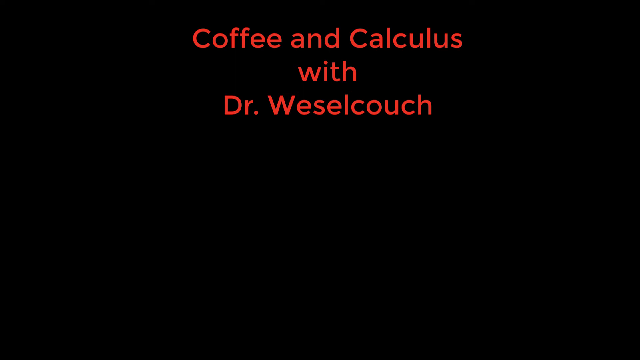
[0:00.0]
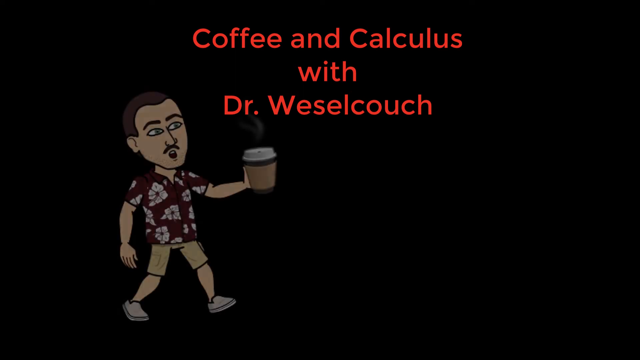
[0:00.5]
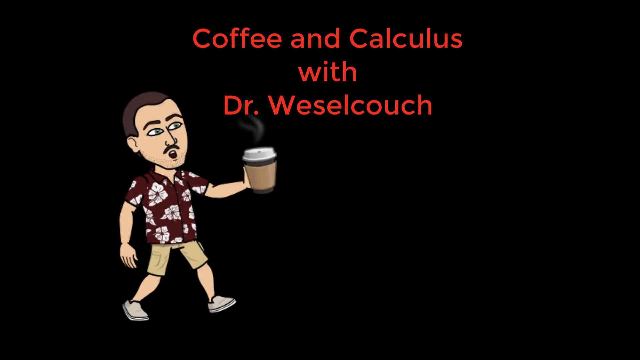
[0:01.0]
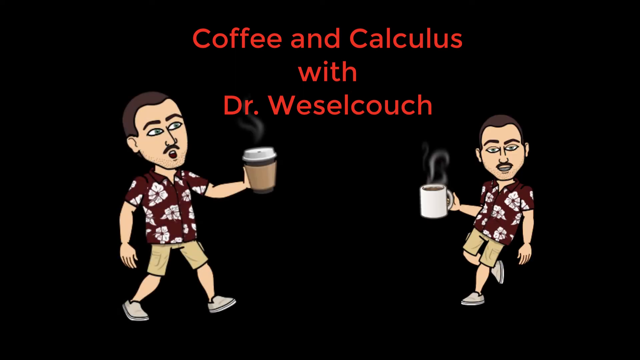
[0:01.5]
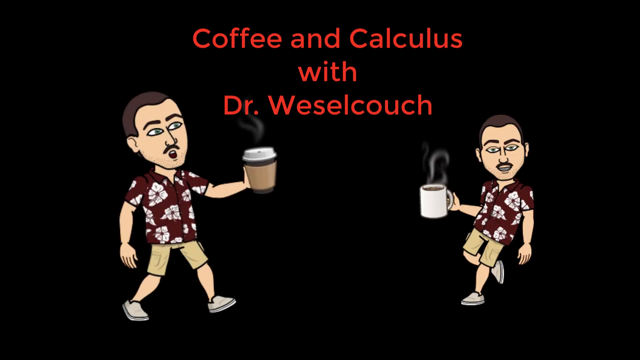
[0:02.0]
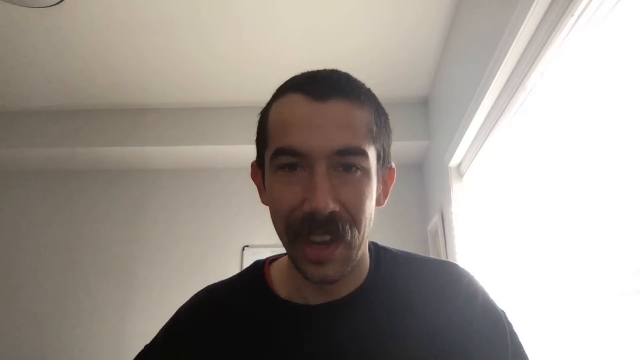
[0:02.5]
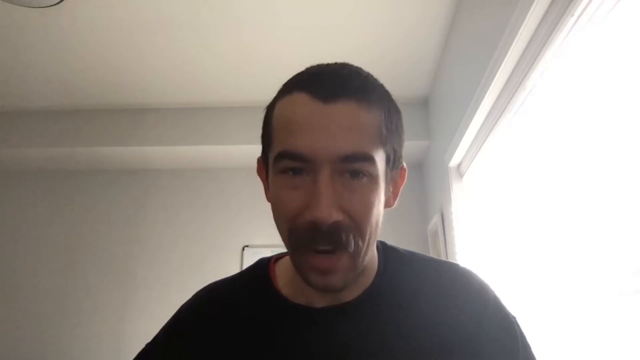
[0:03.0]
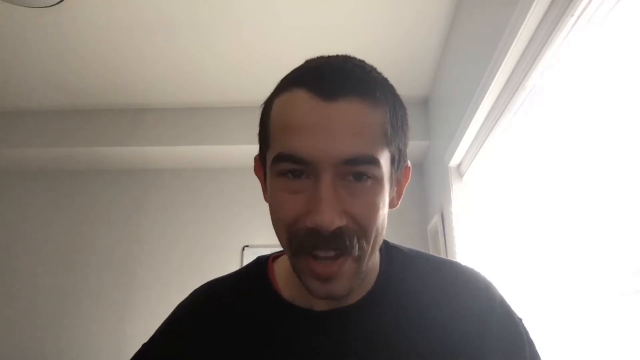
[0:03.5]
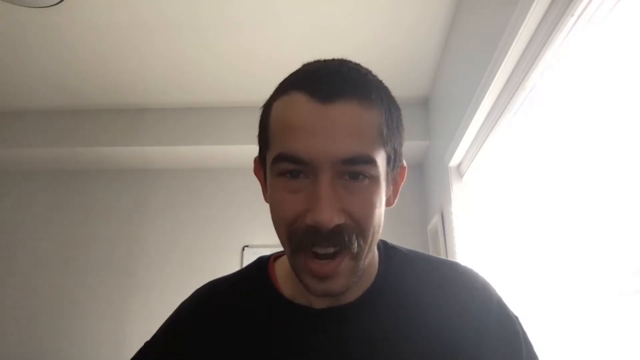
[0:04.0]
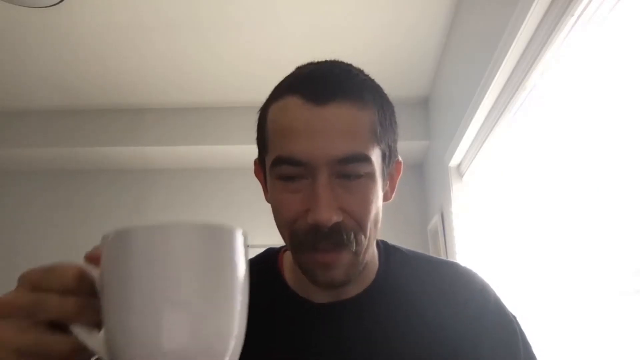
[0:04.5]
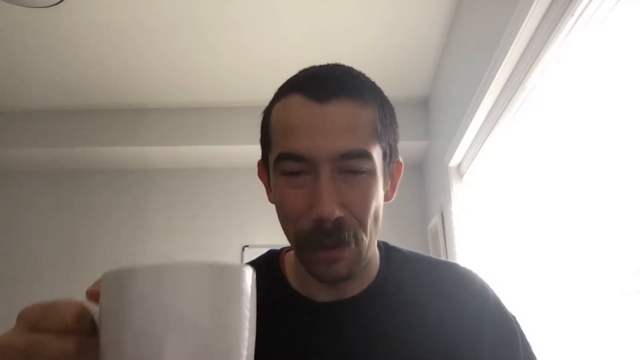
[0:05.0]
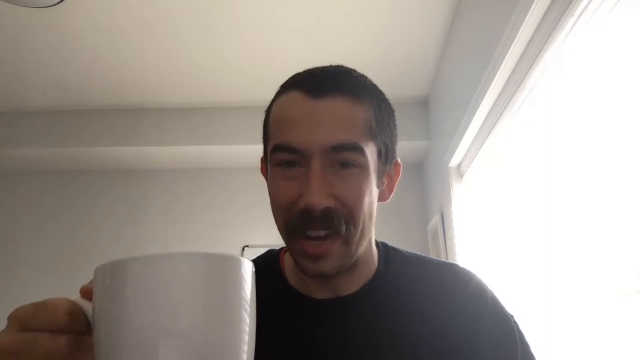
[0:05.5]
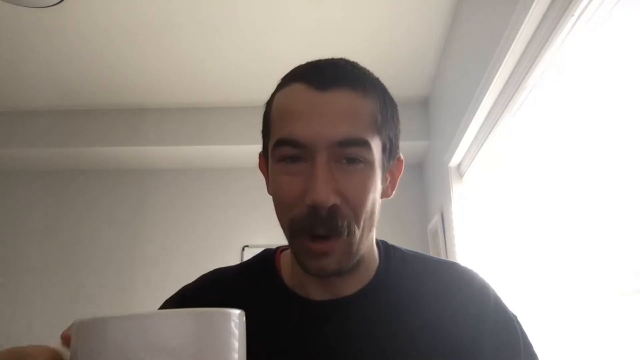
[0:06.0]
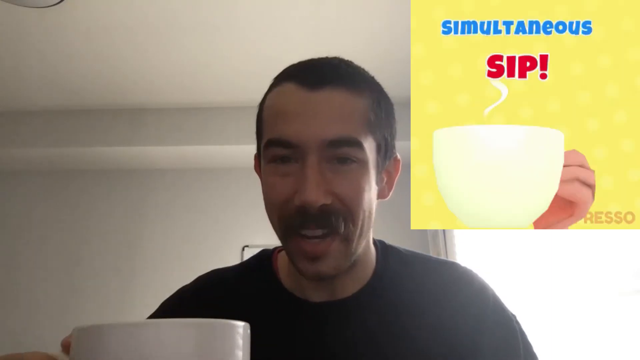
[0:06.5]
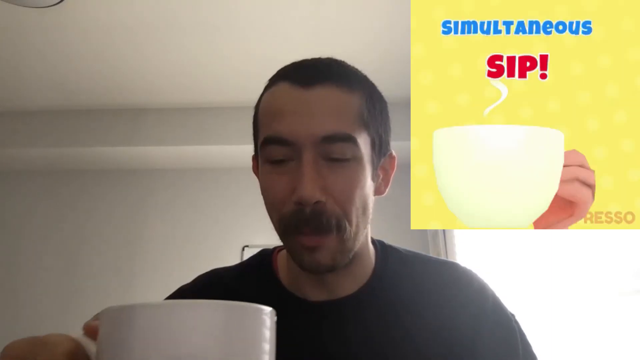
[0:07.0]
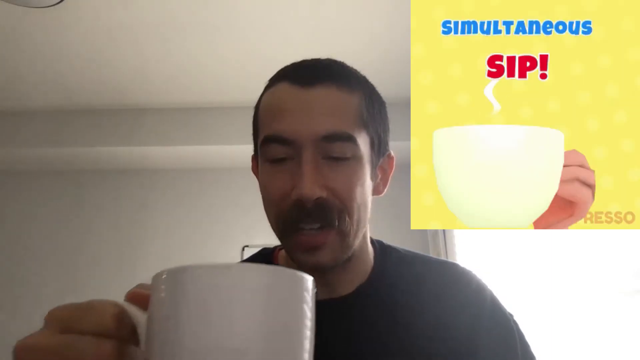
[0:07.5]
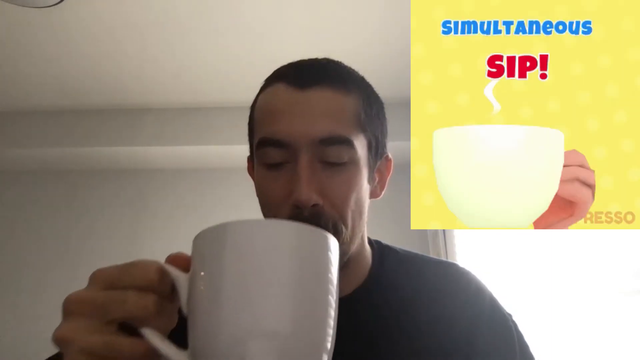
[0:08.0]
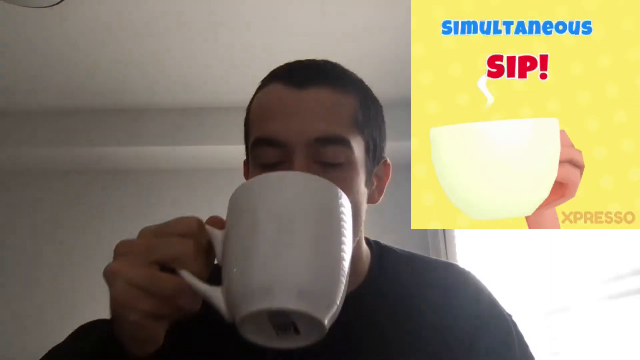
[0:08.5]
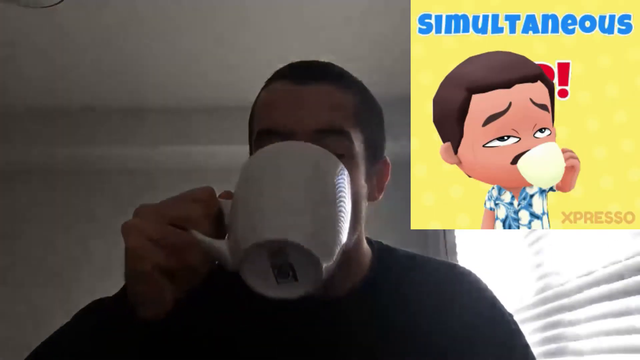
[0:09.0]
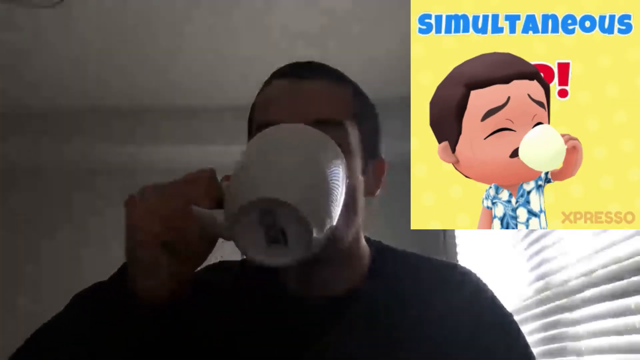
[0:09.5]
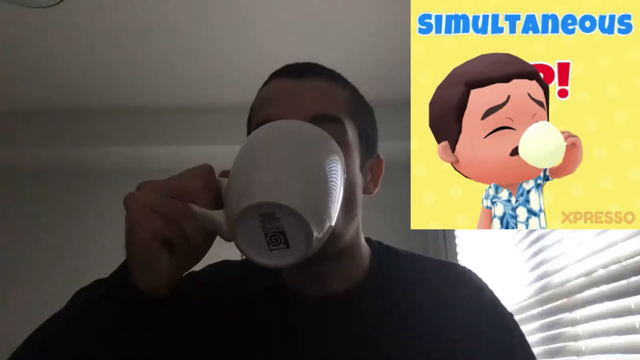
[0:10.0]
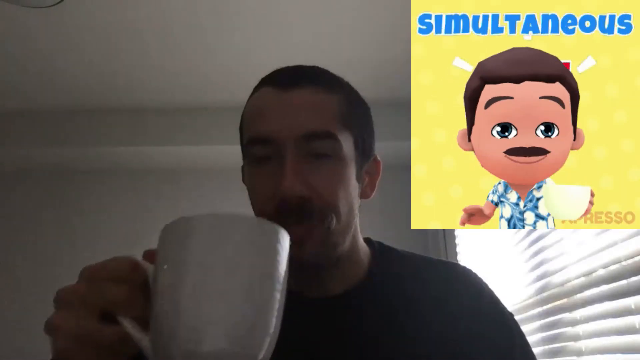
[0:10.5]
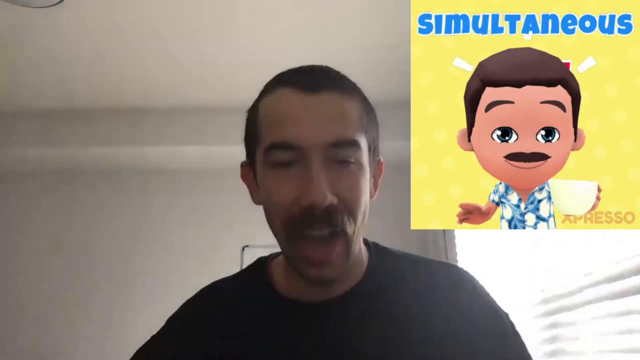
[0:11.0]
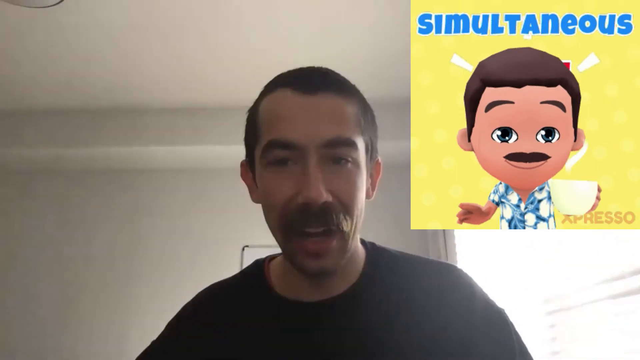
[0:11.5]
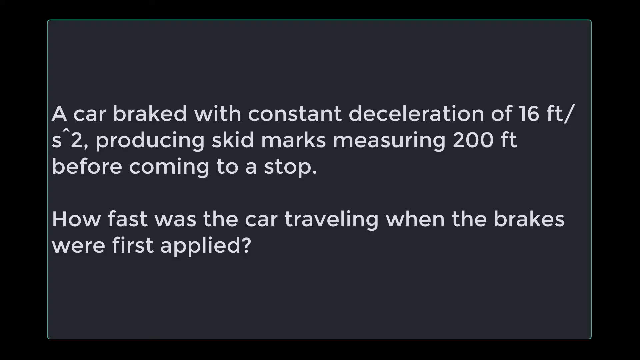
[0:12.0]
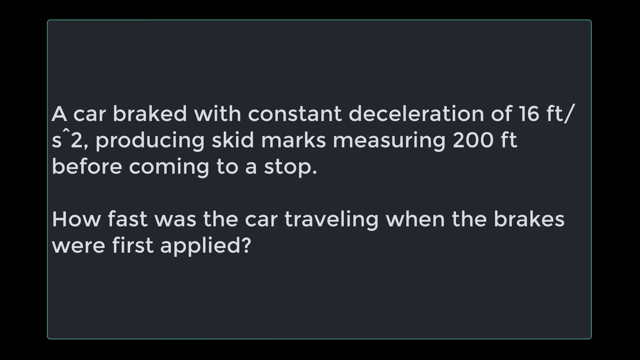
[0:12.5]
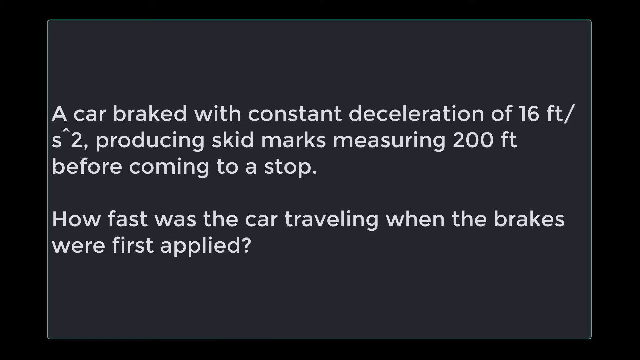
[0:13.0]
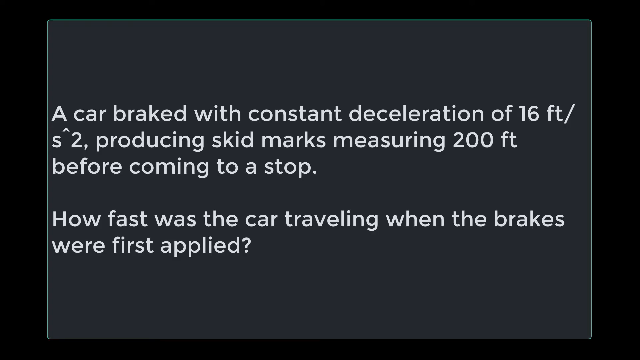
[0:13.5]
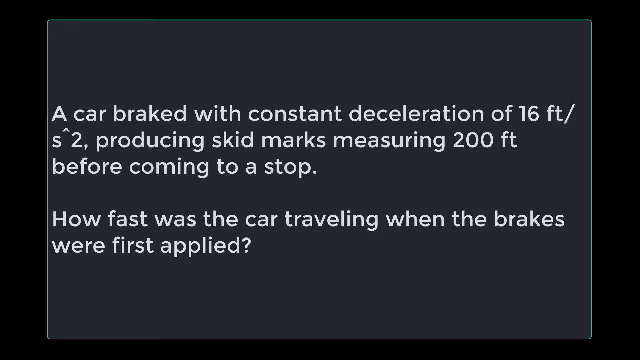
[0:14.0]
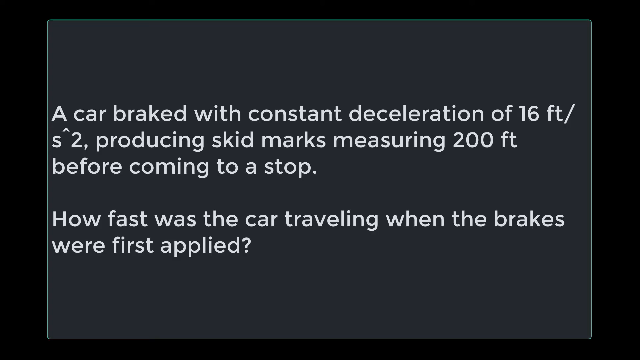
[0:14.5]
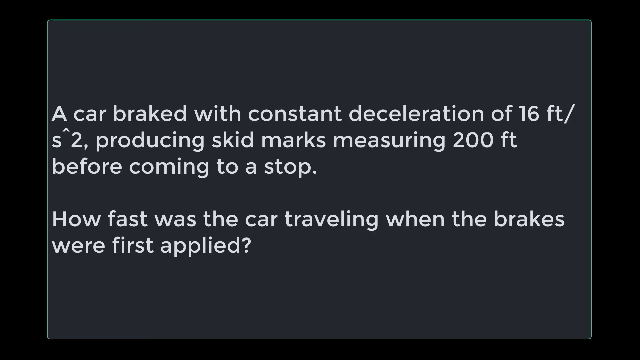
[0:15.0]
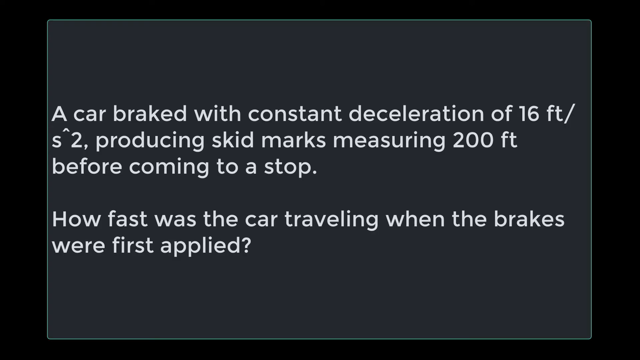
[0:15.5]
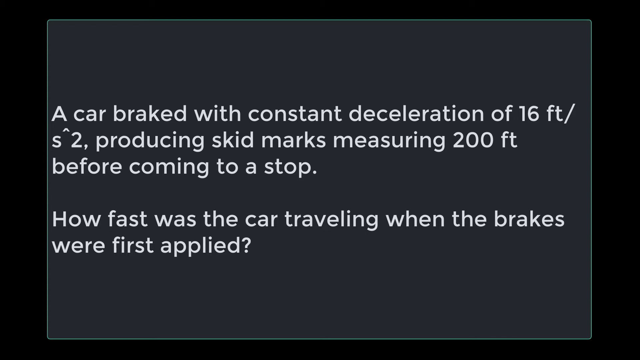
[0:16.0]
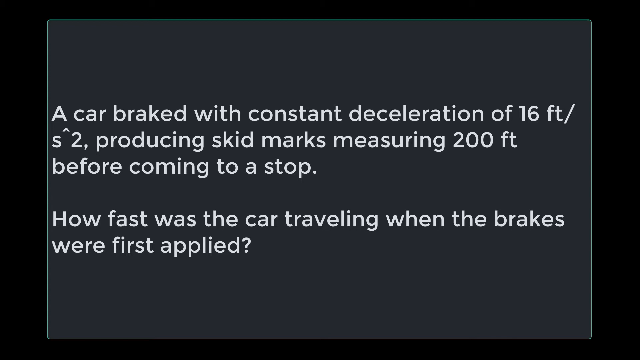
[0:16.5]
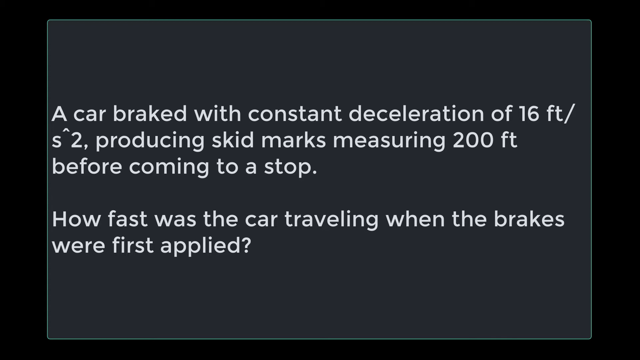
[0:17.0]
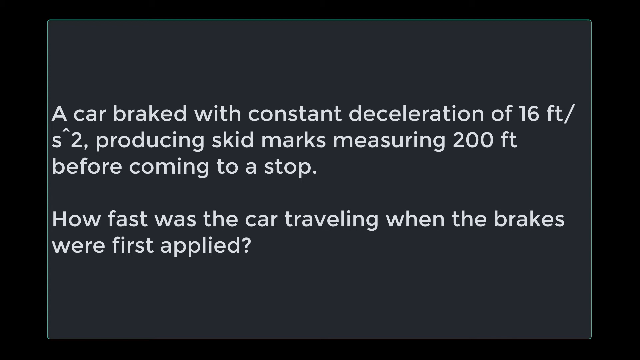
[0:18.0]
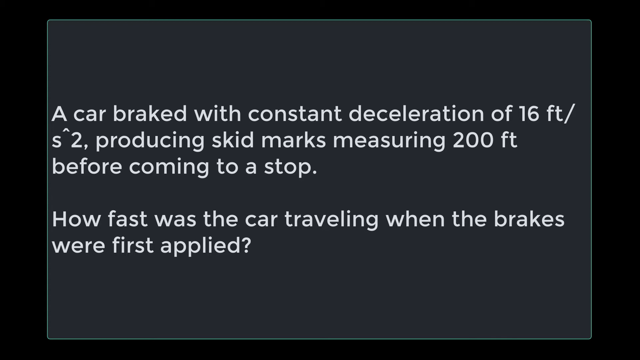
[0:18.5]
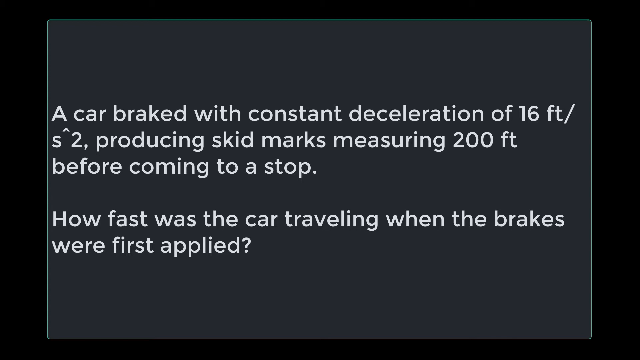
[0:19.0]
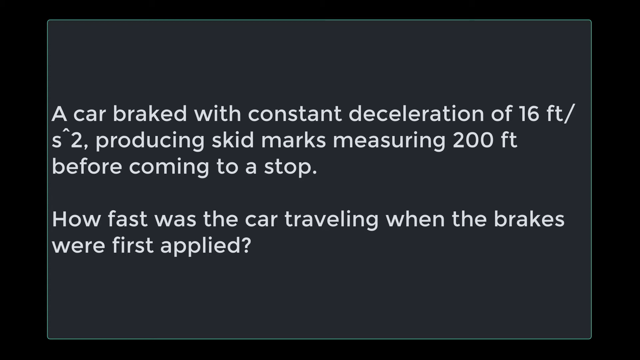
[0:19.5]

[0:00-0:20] This educational video starts with a black screen and red writing that says "coffee and calculus with Dr. Weselcouch." Two caricatures of Dr. Weselcouch then appear on the screen, one on the left and one on the right. In the one on the left he holds a cup of coffee in his left hand; in the one on the right he holds a cup of coffee in his right hand. He wears a Hawaiian shirt and shorts. Next comes video of a man talking directly to the camera. He lifts his right hand, holding a white mug of coffee. In the top right corner a yellow square appears with an illustration of a hand holding a cup of coffee and words in blue and red that say "simultaneous sip." The man takes a sip of his coffee, and an animation of a man in the yellow square does the same. Then a black screen appears with white text that says "a car braked with constant deceleration of 16 feet per second squared, producing skid marks measuring 200 feet before coming to a stop. How fast was the car travelling when the brakes were first applied?"